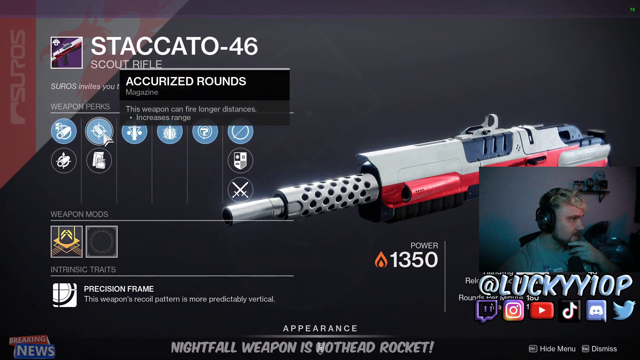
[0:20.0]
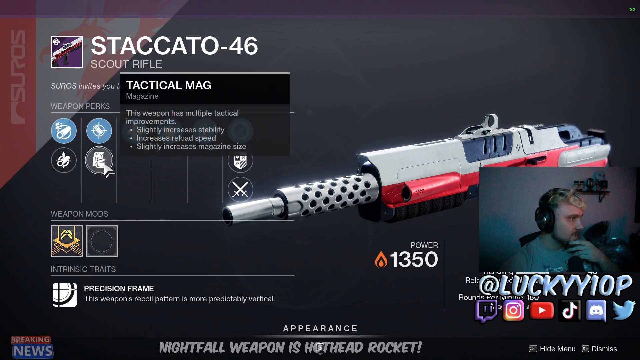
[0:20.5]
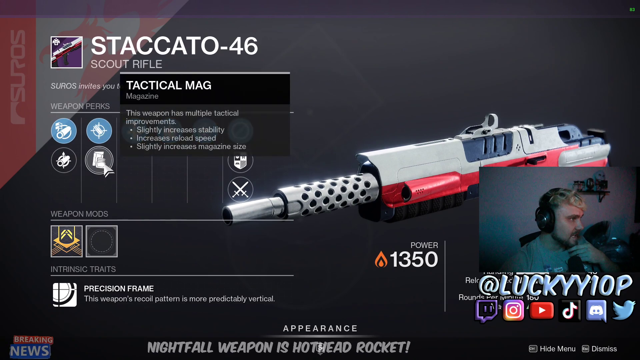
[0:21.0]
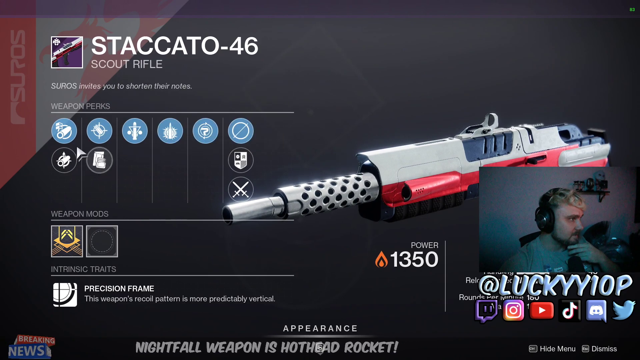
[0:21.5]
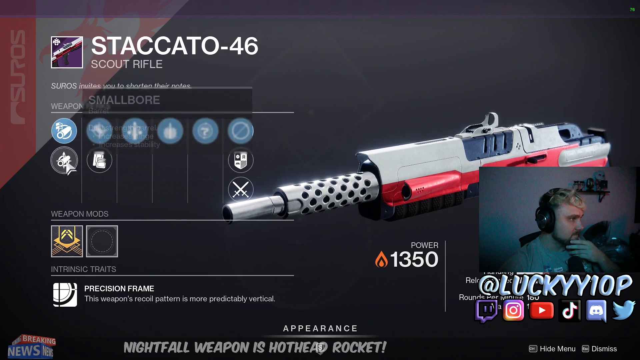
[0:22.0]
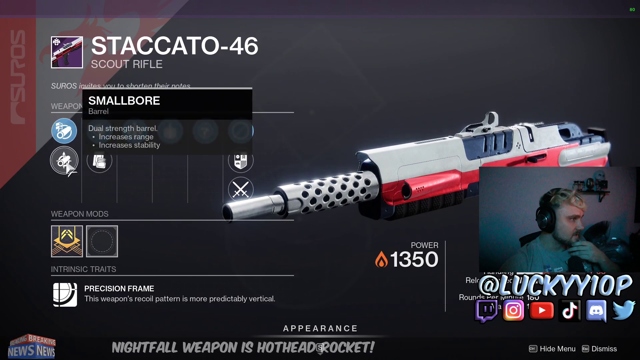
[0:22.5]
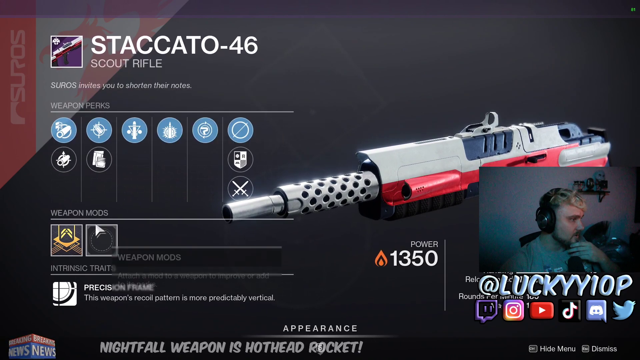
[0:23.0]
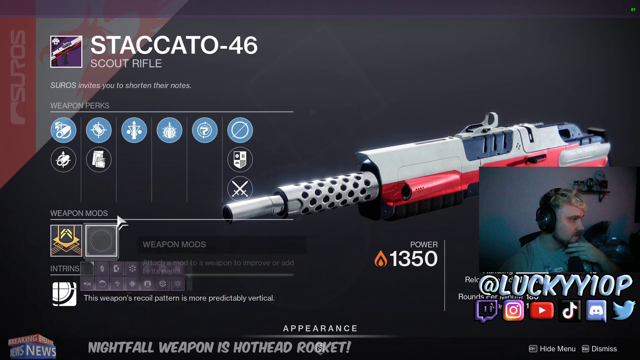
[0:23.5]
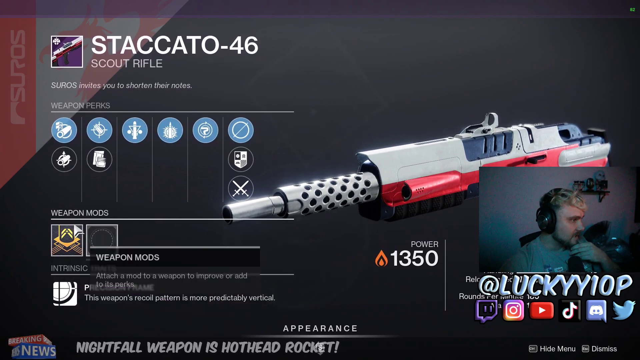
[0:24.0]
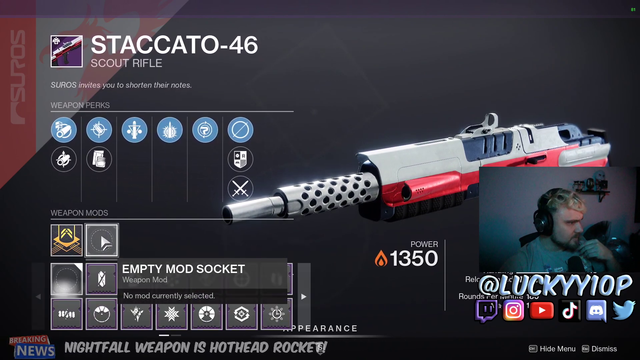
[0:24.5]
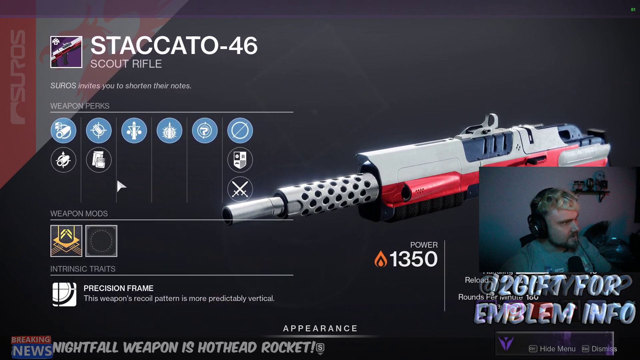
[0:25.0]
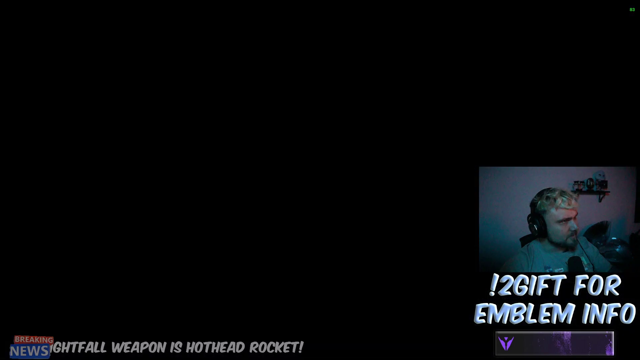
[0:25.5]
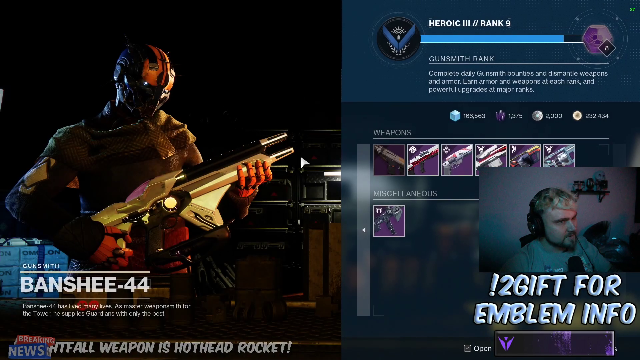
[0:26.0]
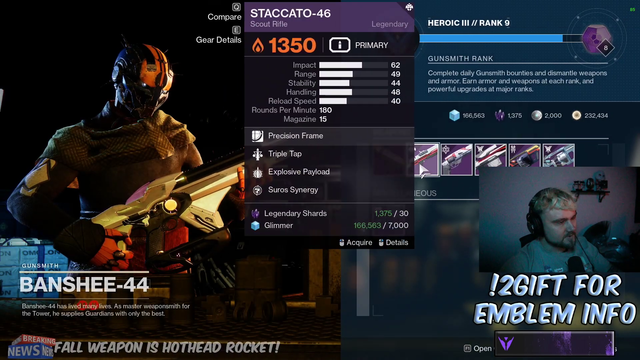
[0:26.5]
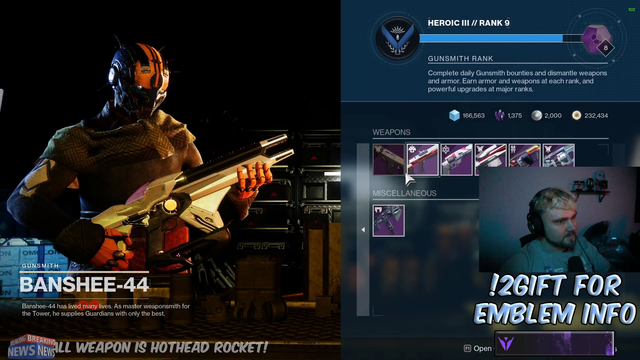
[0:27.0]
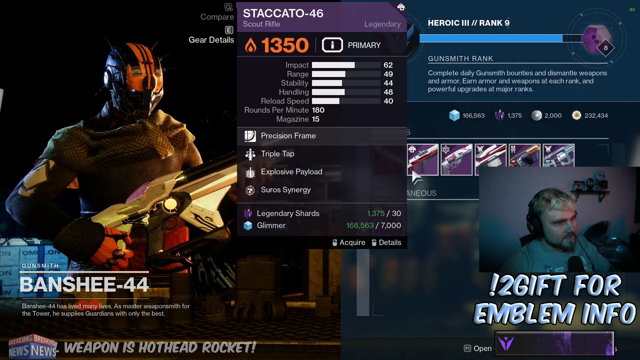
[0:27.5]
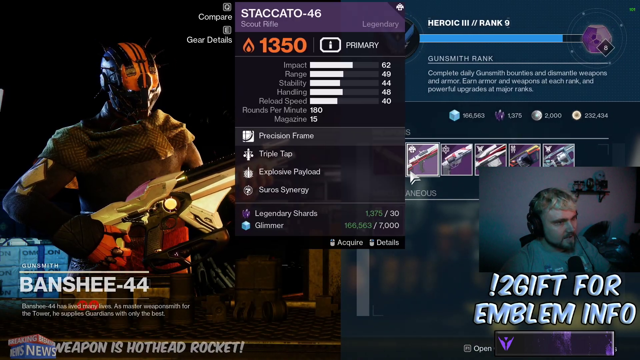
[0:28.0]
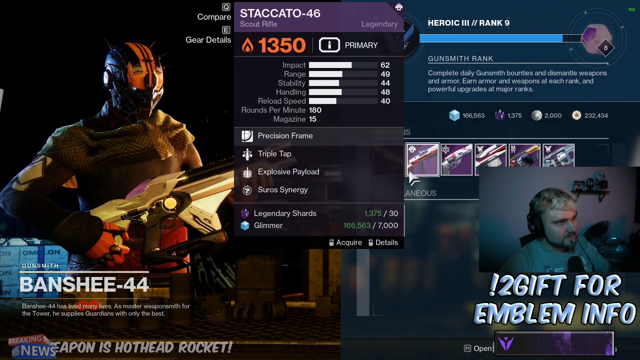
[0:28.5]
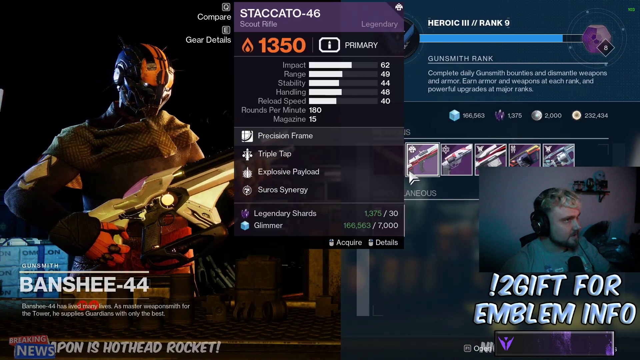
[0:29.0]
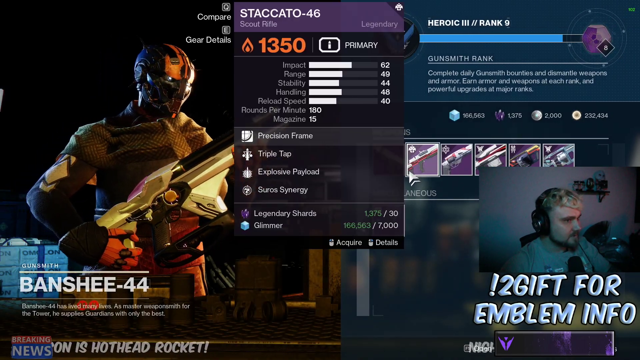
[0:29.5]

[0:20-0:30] The streamer at the bottom right aims at perks on the screen and appears to point to one. The top row has six perks with a light blue background and white icons. The second row has three perks with a black background and white icons, and the bottom row has a single perk with a black background and a white icon that looks like two swords crossing over each other. Below, in small letters like a title, is "weapon mods", underlined by a long horizontal line, with two icons of unclear meaning beneath it. Under that is another title, "intrinsic traits", with a long white horizontal line underneath. Below it, in white letters, is "precision frame", and under that, in smaller letters, "this weapon's recoil pattern is more predictably vertical." To the left of it is an icon that looks like a crosshair. A loading screen follows, and the view returns to the screen with his character, this time showing some ratings for the weapon he chose.